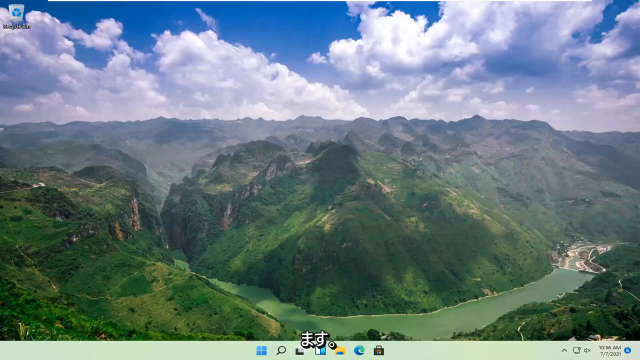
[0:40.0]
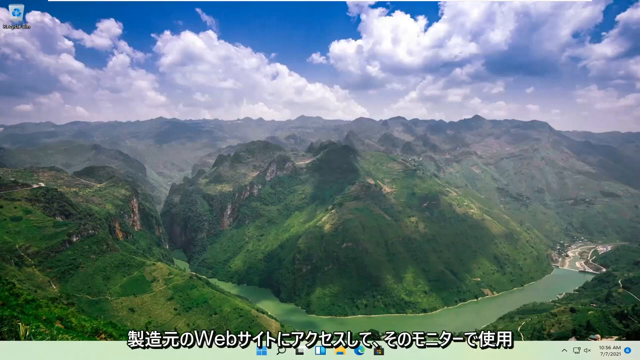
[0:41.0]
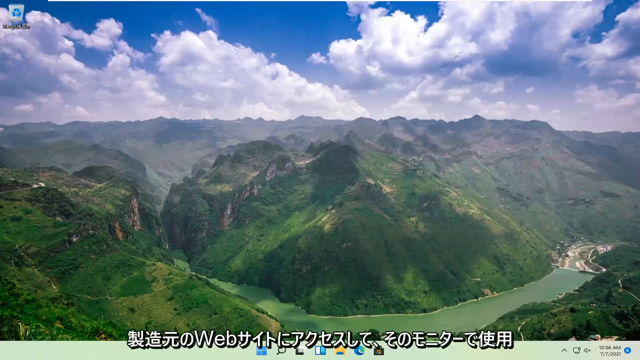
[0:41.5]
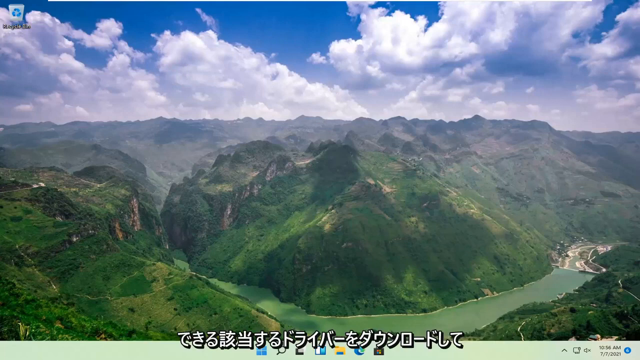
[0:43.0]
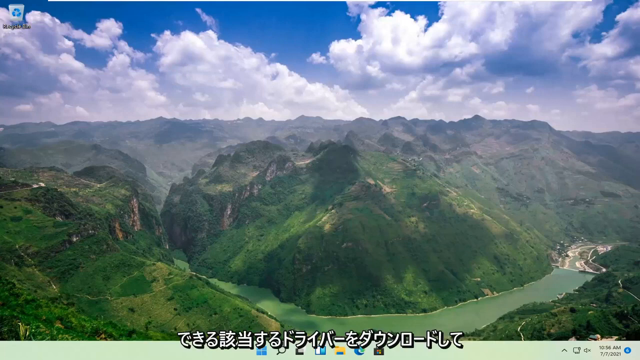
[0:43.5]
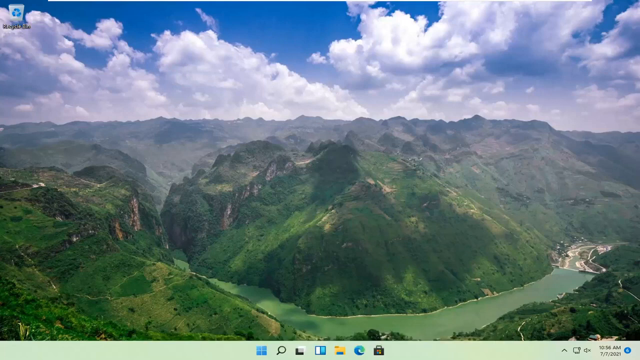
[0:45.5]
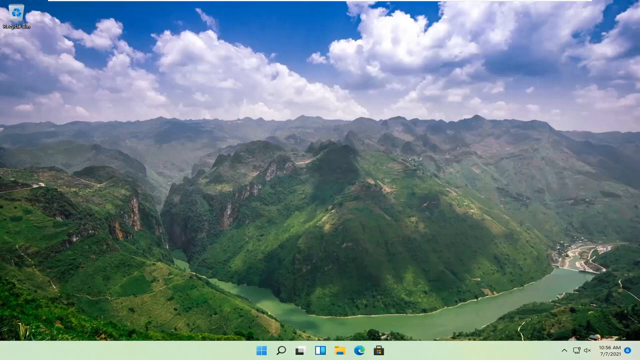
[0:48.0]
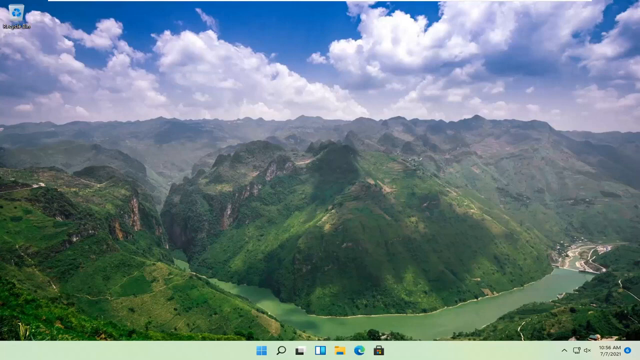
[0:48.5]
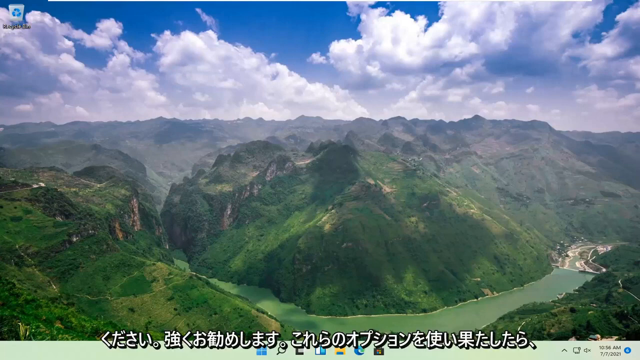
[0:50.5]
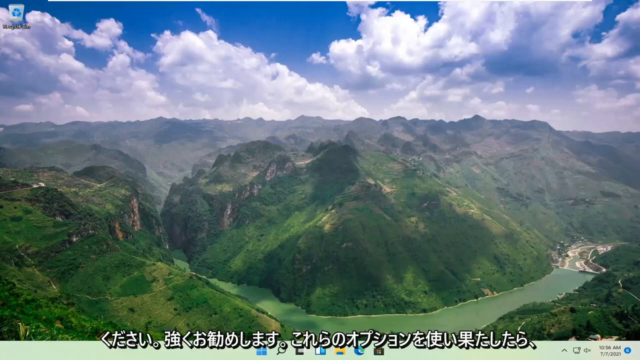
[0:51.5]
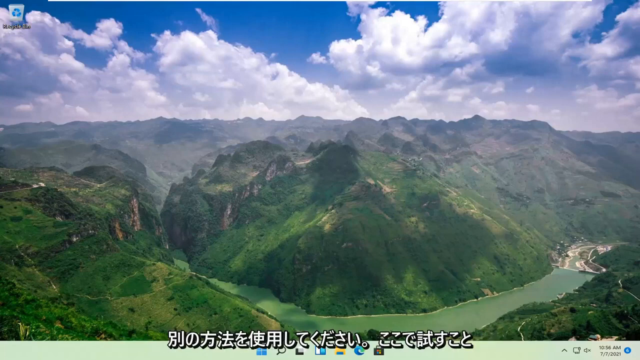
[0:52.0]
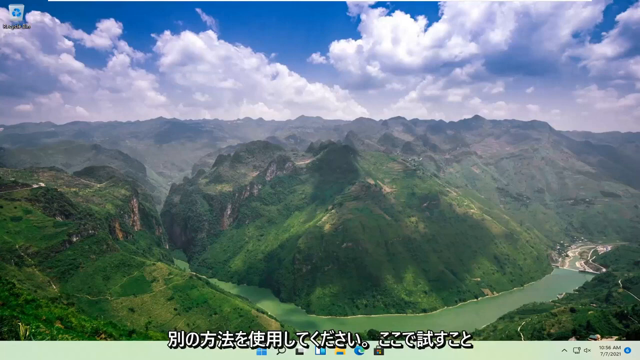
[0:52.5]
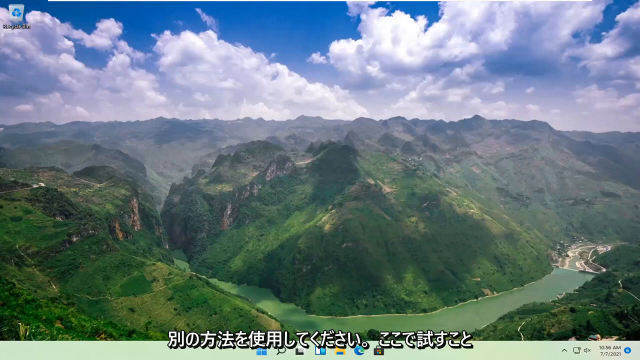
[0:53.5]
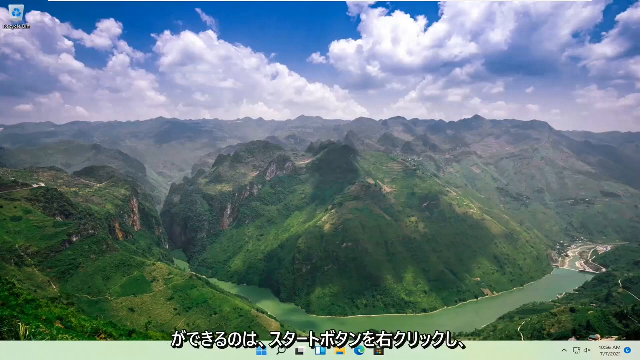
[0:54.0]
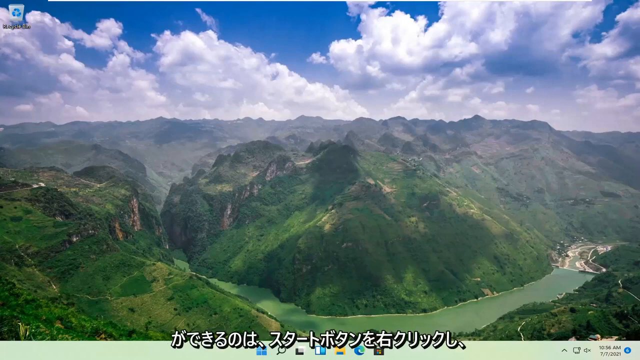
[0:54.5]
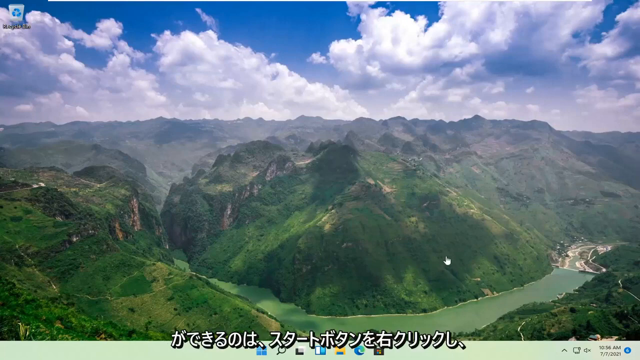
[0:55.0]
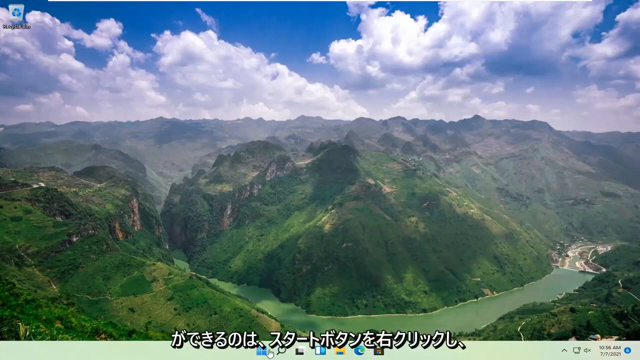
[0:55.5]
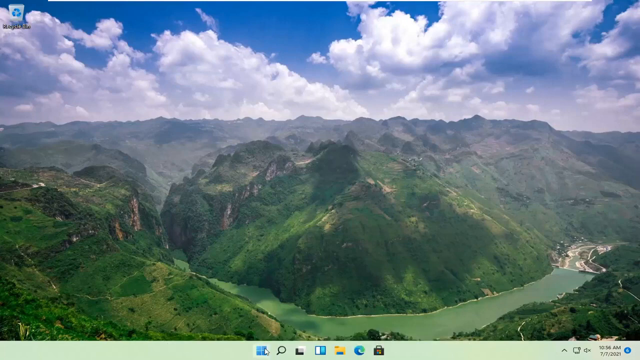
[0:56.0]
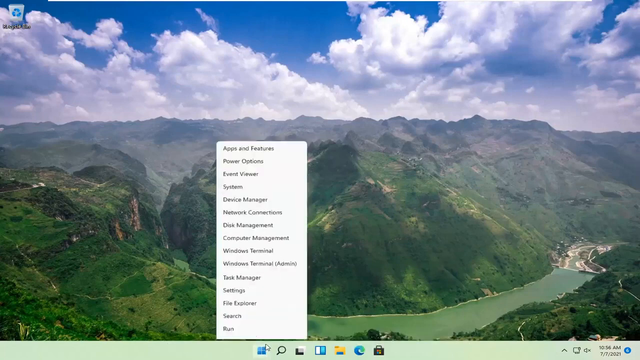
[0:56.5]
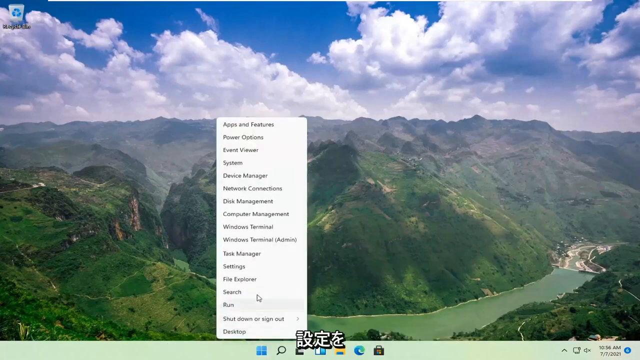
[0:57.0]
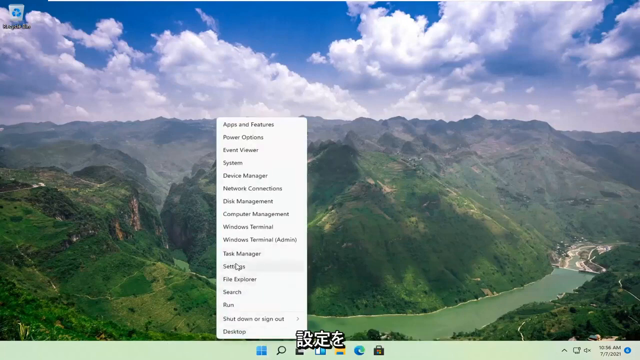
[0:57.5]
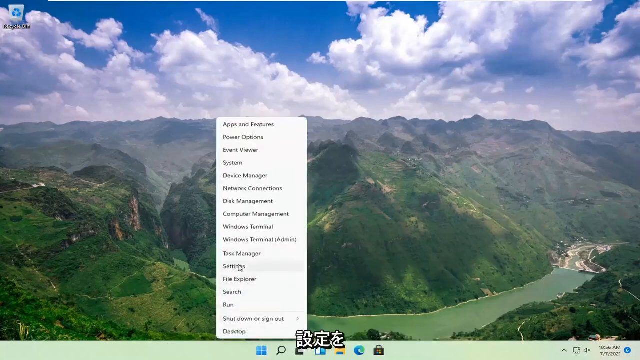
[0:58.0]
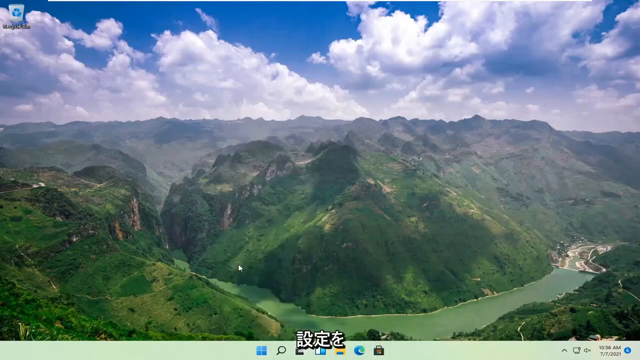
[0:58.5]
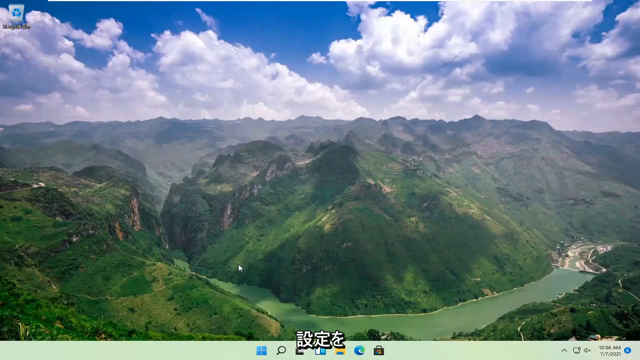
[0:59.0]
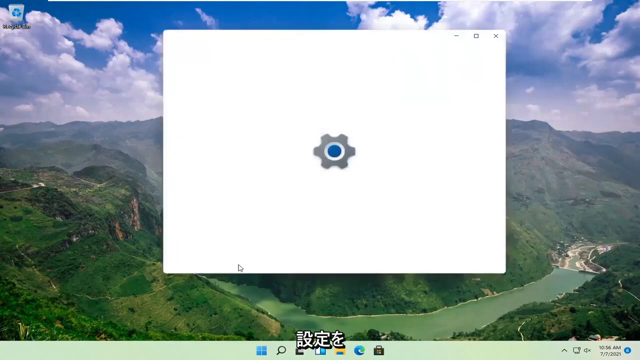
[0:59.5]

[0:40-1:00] The view continues to look over a mountain range with multiple mountain peaks, the sky and the clouds. After a few seconds, a cursor comes into the shot. It clicks on one of the icons at the bottom of the screen, which pulls up a box with another option in the middle of the screen, and then settings is clicked. A white box opens with the settings tool right in the middle of it. Chinese subtitles are still at the very bottom. No one appears; the setting does not change except for the mouse moving around the screen.